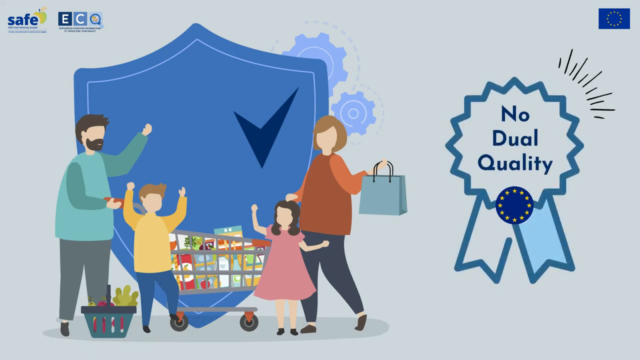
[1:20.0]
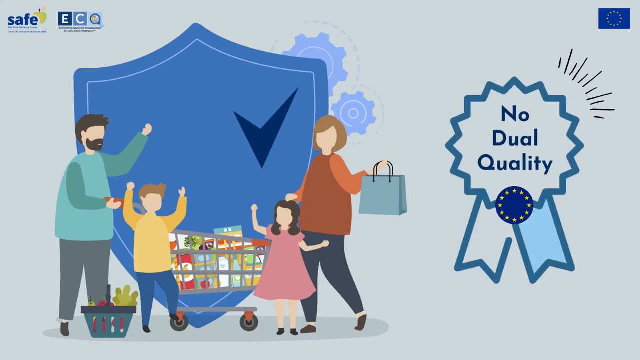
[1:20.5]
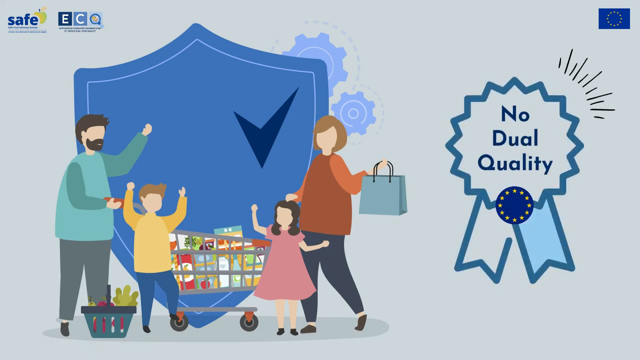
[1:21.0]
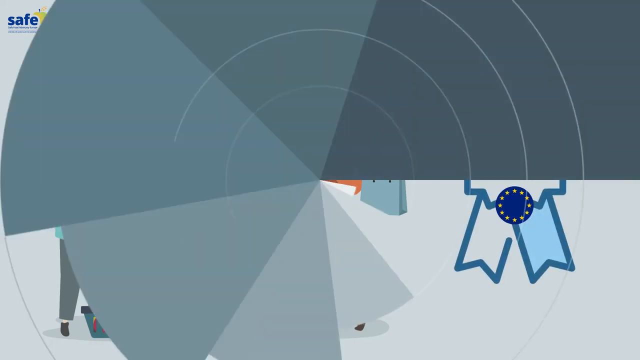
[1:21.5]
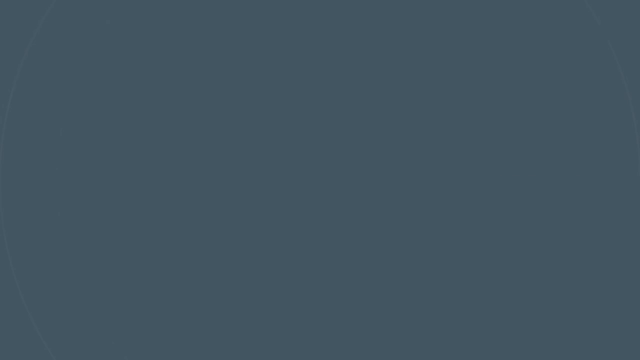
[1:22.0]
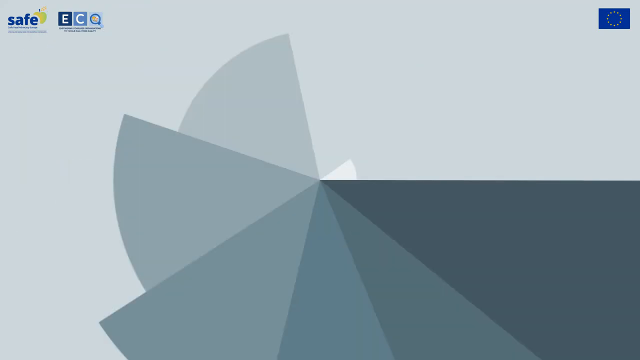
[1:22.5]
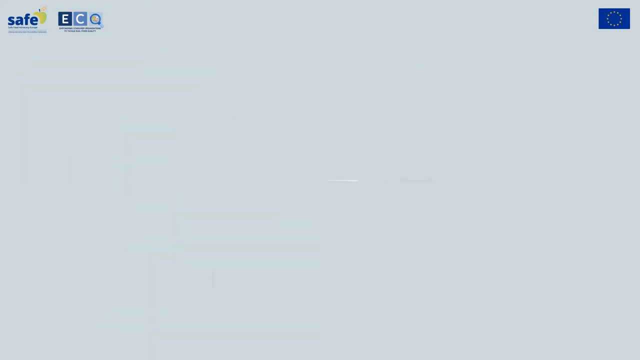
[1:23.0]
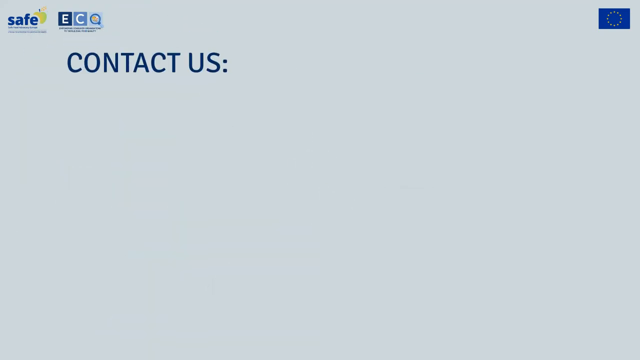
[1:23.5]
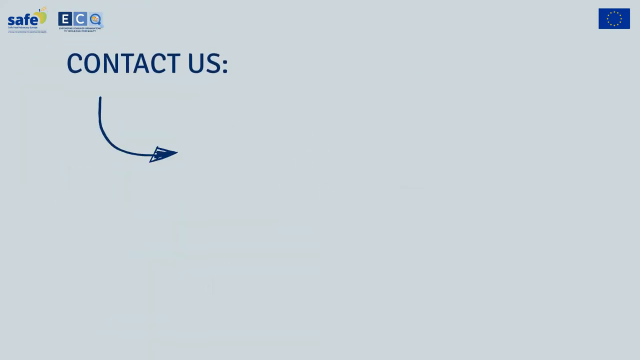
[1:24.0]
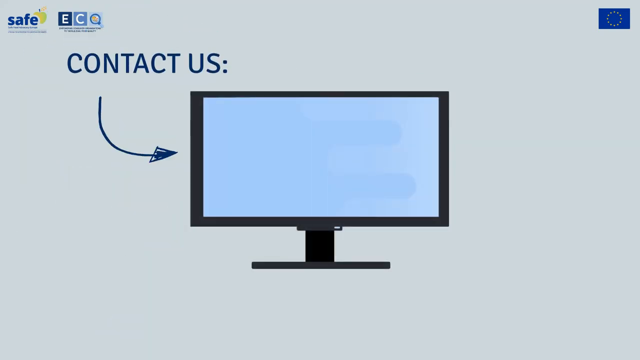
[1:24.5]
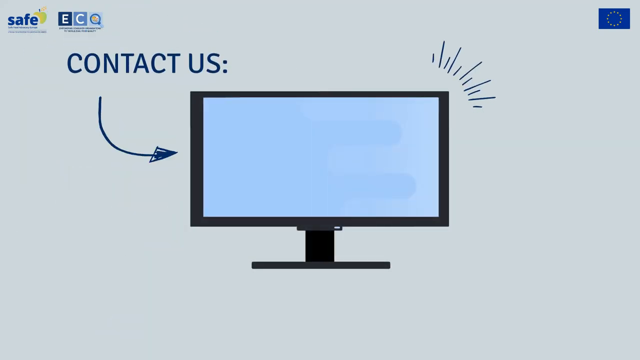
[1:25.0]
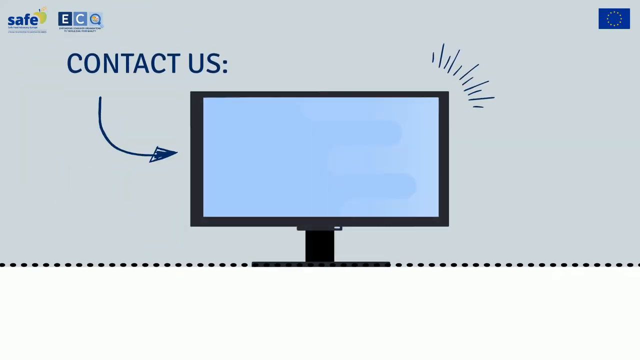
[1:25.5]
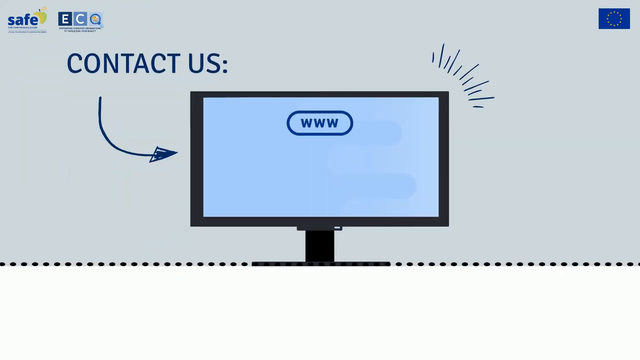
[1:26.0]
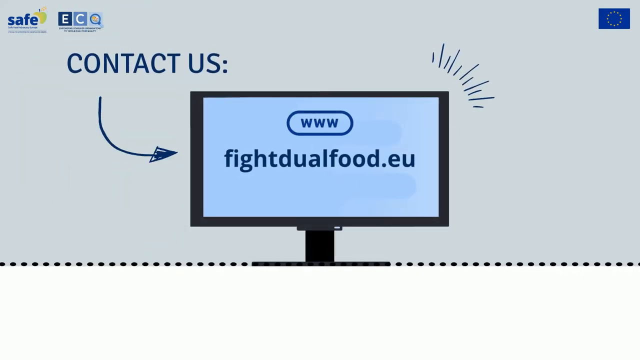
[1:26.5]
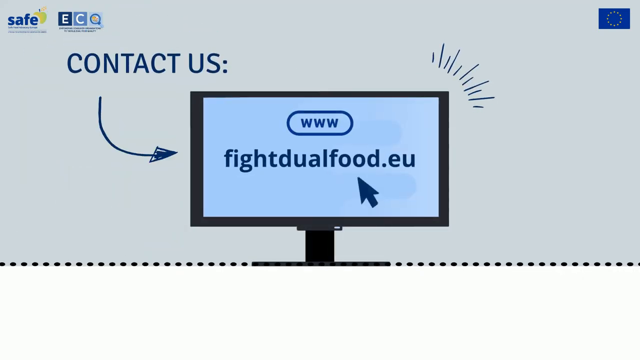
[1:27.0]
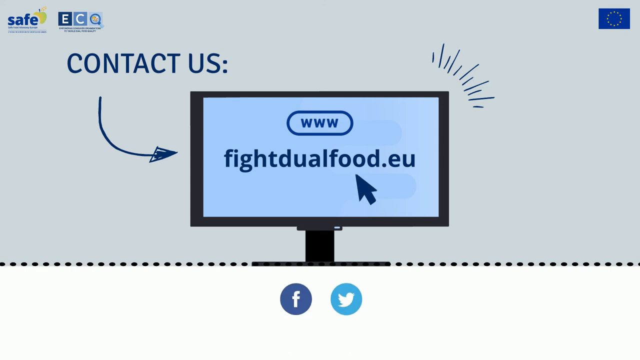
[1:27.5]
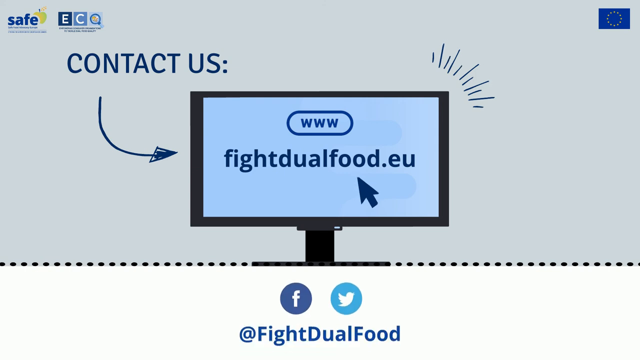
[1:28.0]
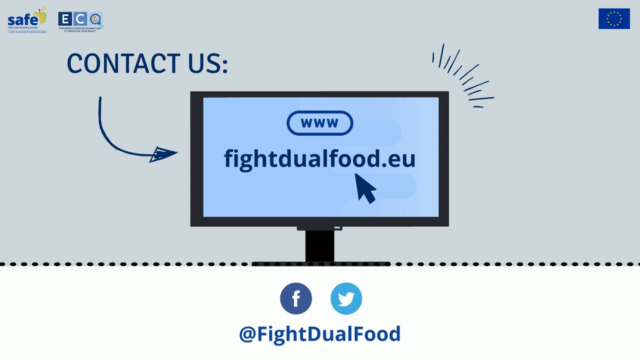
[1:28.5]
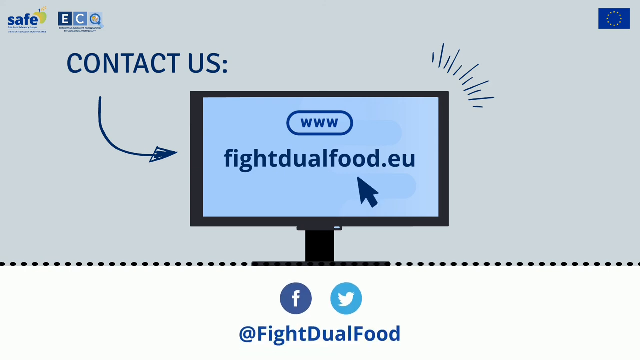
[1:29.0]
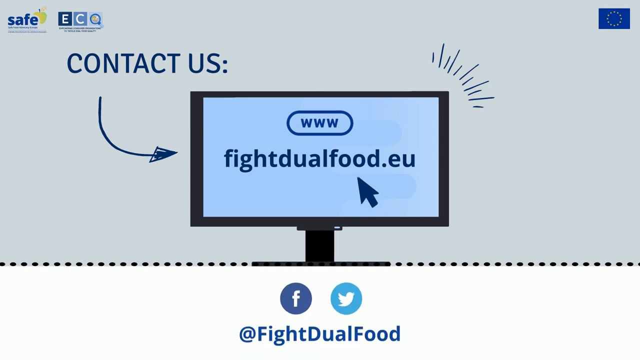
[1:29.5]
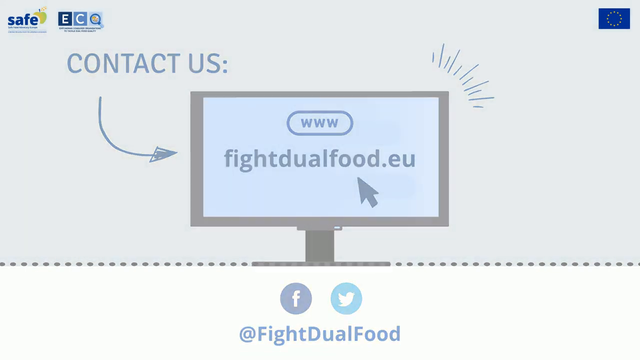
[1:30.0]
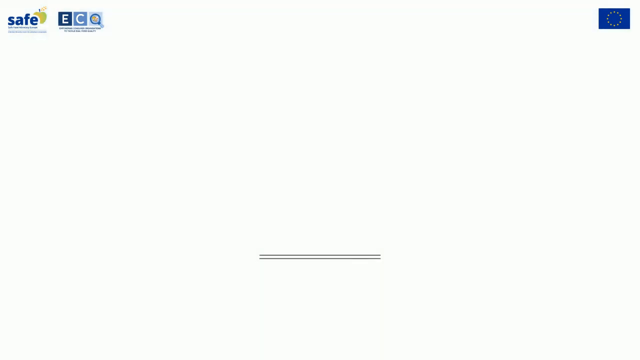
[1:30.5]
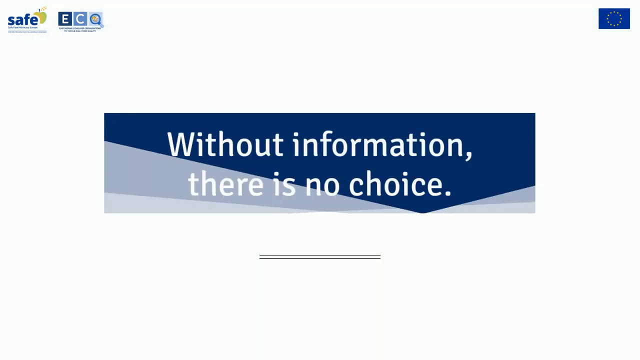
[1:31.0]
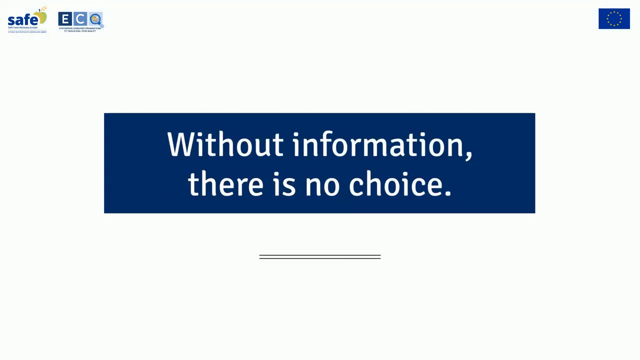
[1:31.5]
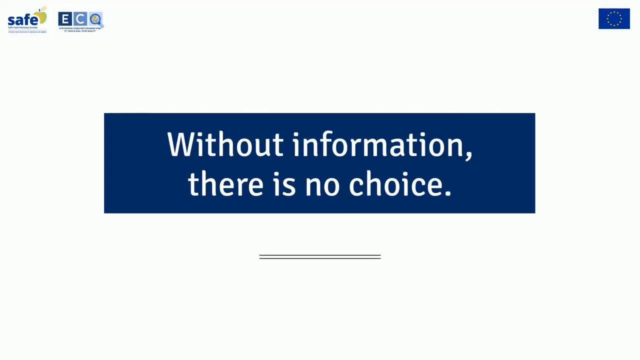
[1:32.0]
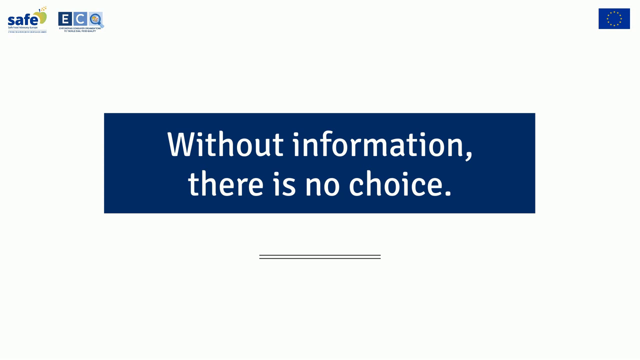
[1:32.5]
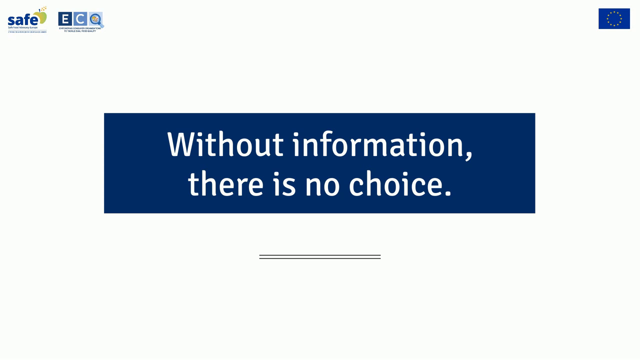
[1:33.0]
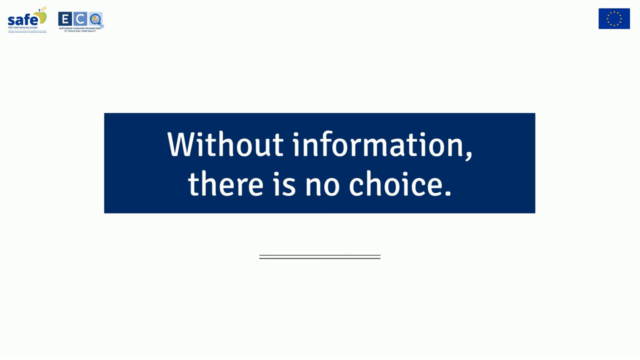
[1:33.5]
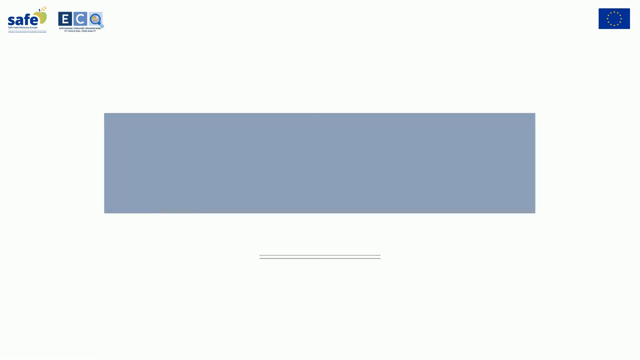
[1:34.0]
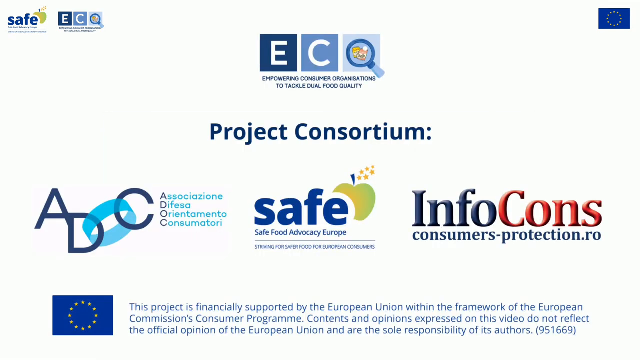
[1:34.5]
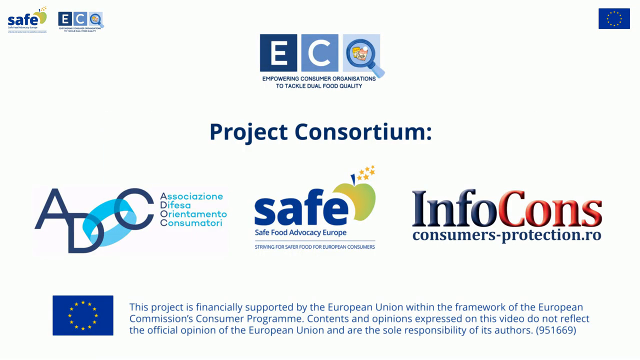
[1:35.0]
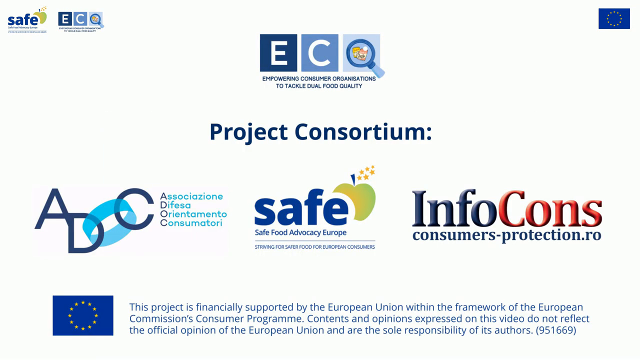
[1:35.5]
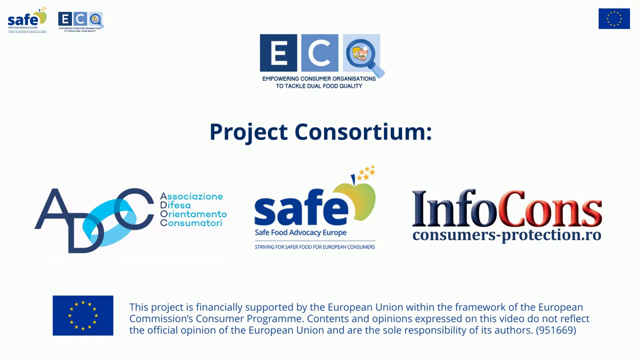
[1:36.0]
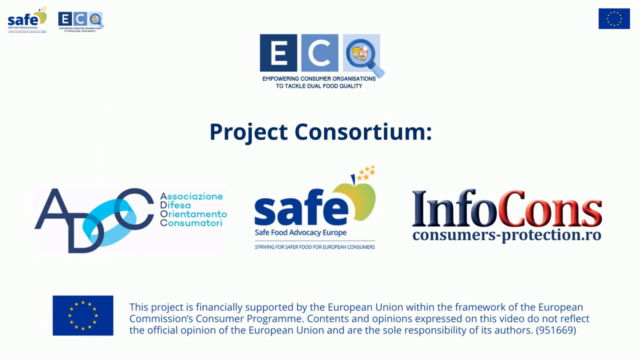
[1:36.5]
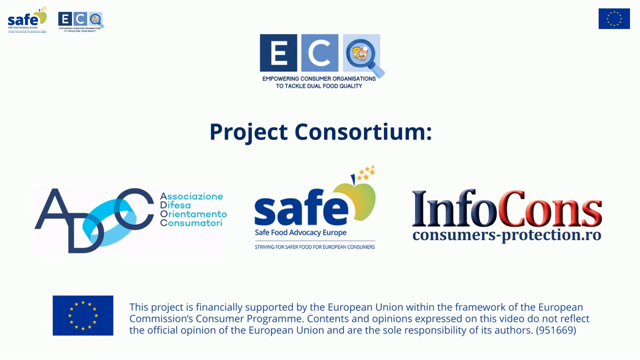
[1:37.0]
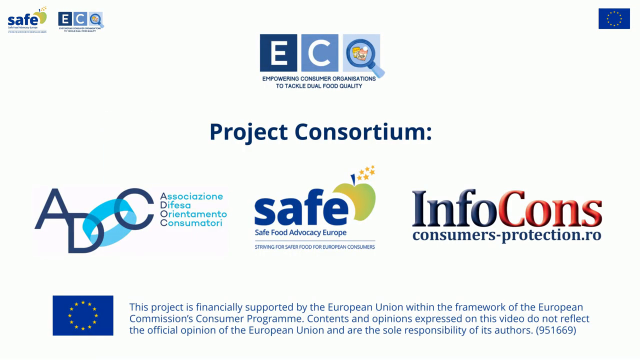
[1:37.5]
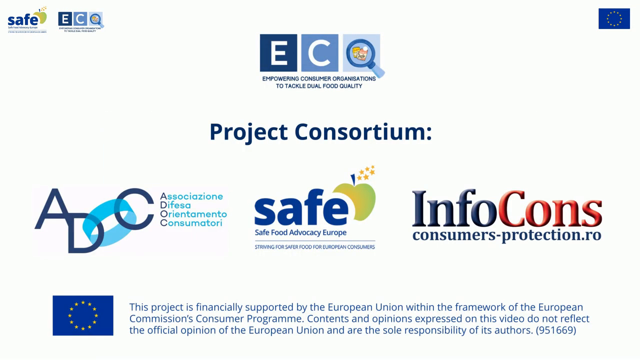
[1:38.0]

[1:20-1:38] The family is shown with the buggy in the center and the armor shield in the background, and the "no dual quality" award ribbon is to their right. The screen spins to a darker, grayish screen, then spins back to a whitish screen. "Contact us" is written in blue at the top left, with a blue arrow curving to a computer screen with a blue background, and a shouting symbol outside the screen at the top right. Inside the computer screen "www.fightdualfood.eu" pops up, and a computer mouse arrow points to the food. The Facebook logo and the Twitter or X logo pop up under the computer screen. It then switches to a white screen where a blue box pops up reading "without information, there is no choice". This goes away, and ECO with the magnifying glass appears, with "Empowering consumer organization to tackle dual food quality" under it. Below that are "project consortium" and "ADOC", with "safe" next to it and "infocoms" next to that.